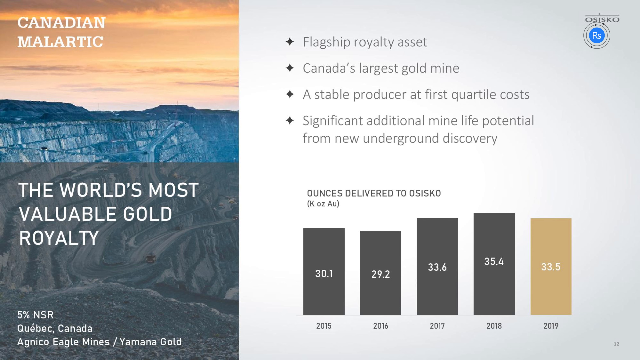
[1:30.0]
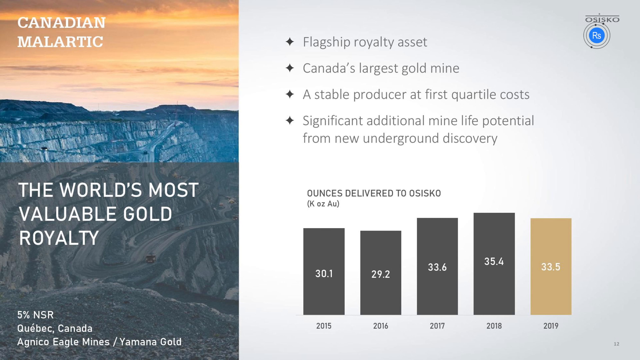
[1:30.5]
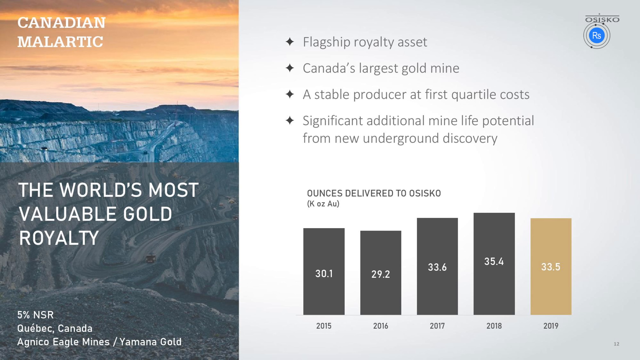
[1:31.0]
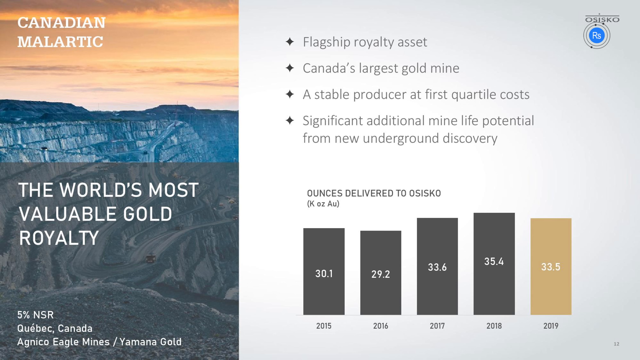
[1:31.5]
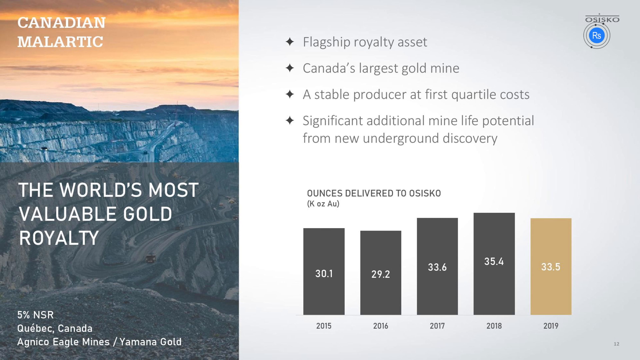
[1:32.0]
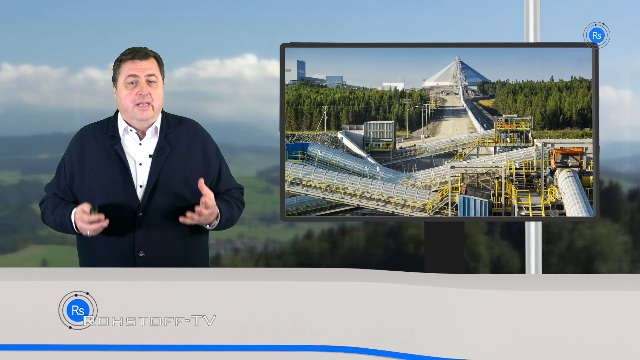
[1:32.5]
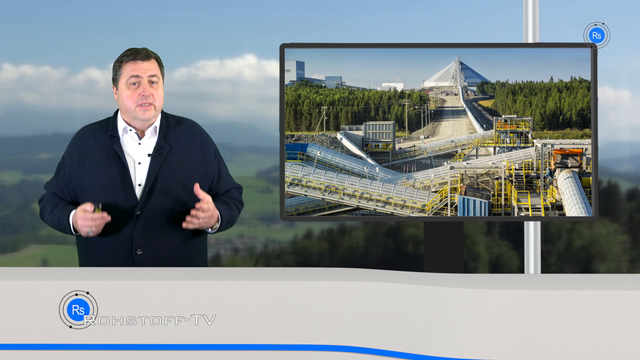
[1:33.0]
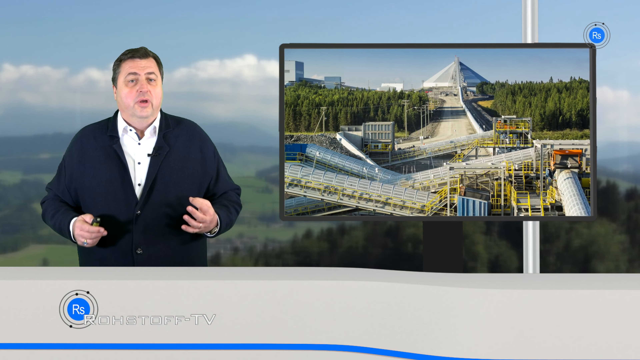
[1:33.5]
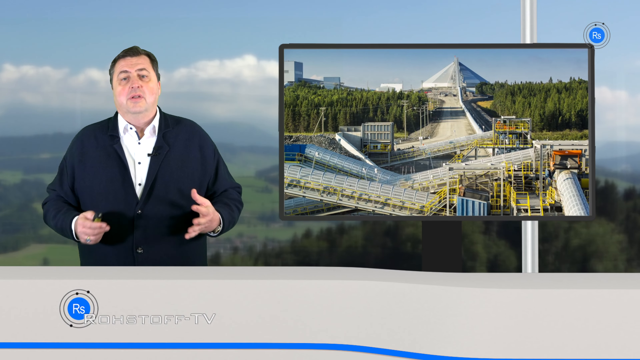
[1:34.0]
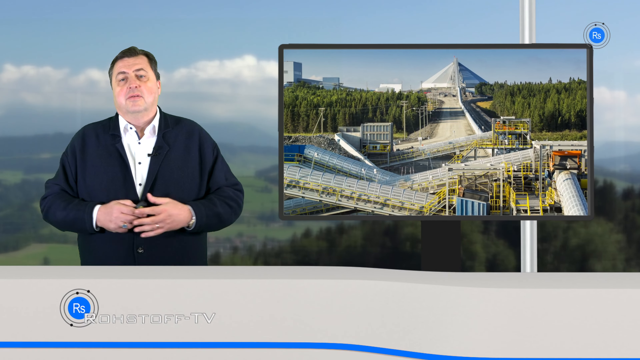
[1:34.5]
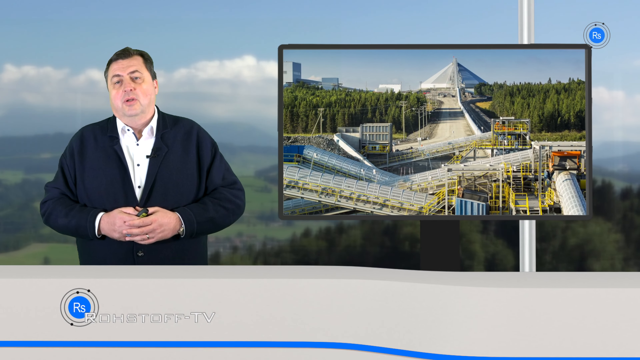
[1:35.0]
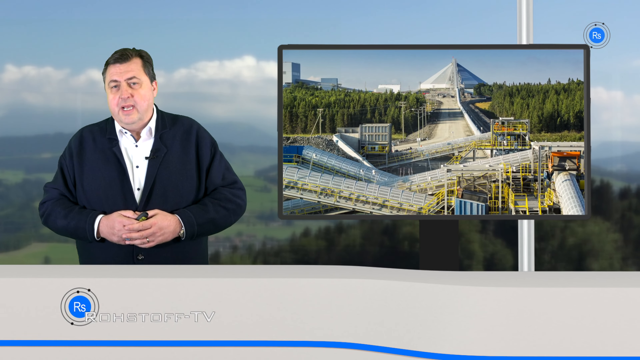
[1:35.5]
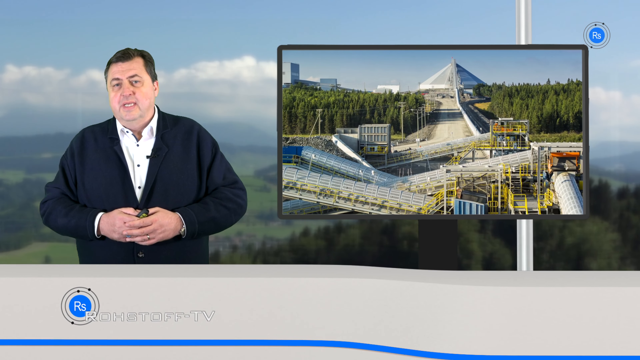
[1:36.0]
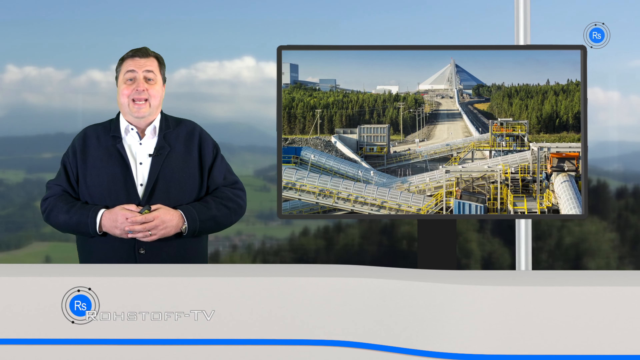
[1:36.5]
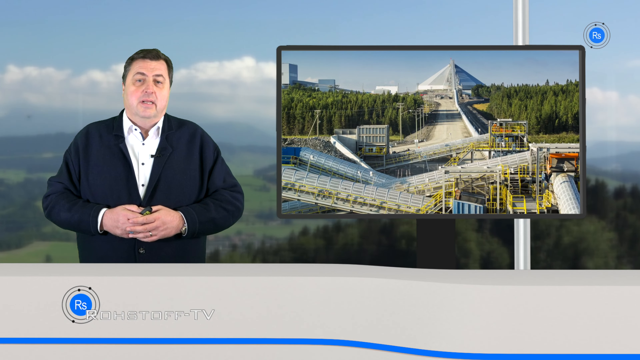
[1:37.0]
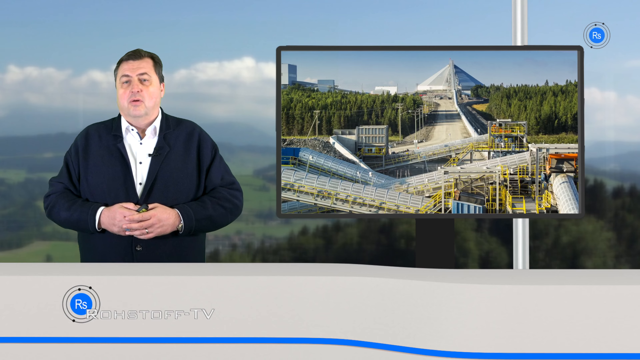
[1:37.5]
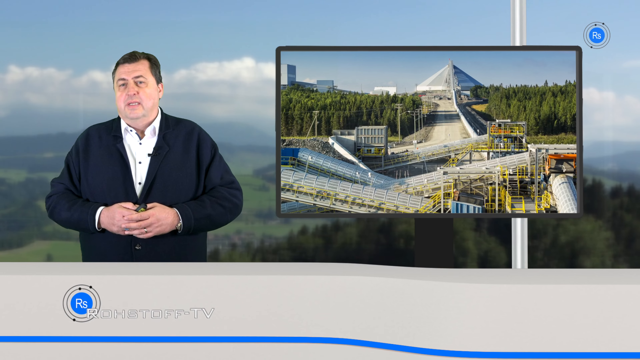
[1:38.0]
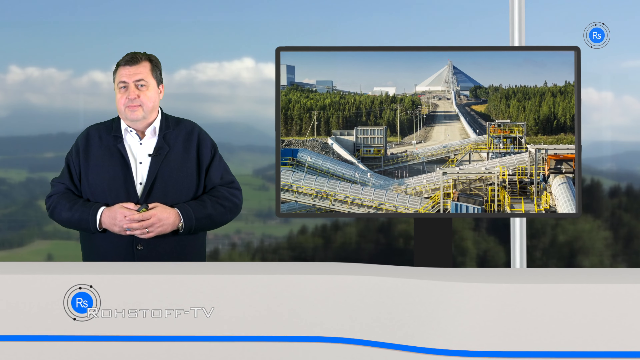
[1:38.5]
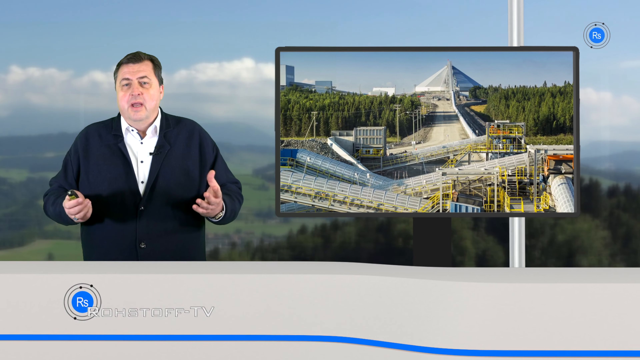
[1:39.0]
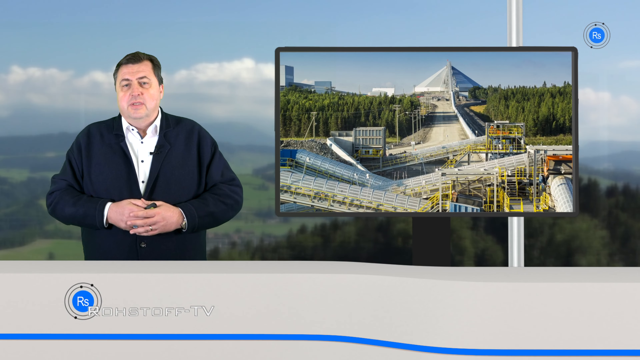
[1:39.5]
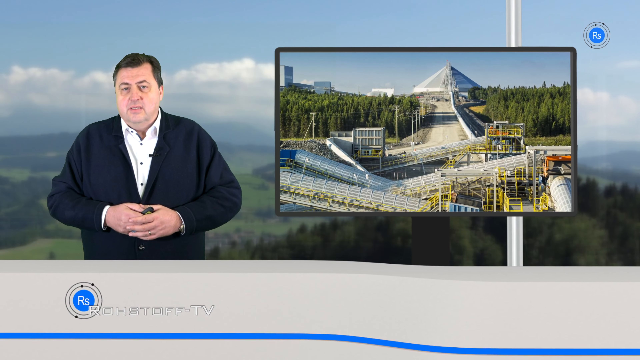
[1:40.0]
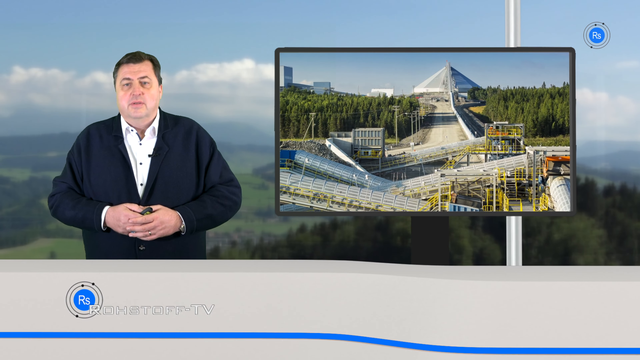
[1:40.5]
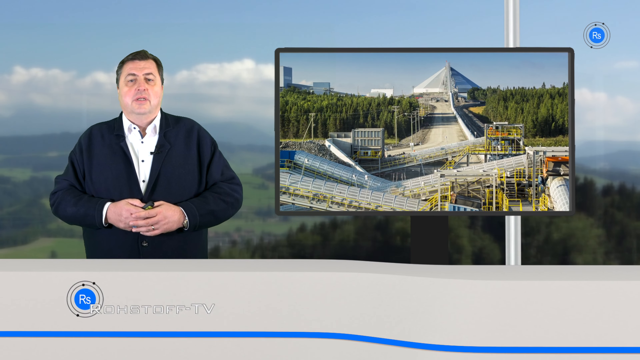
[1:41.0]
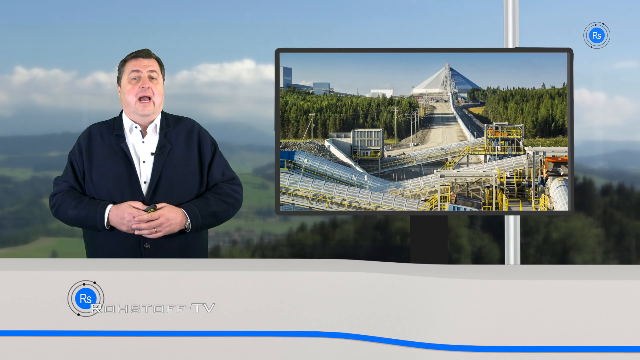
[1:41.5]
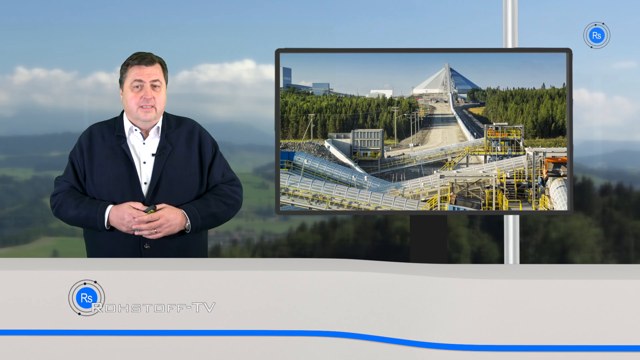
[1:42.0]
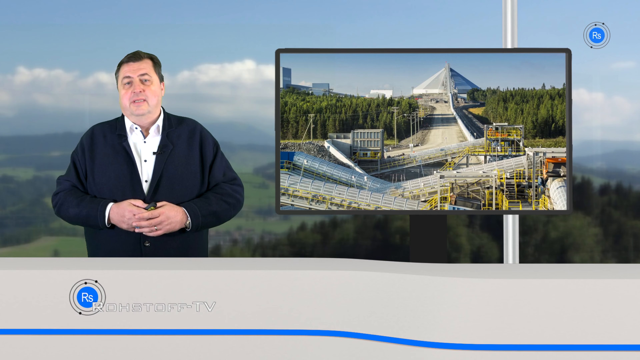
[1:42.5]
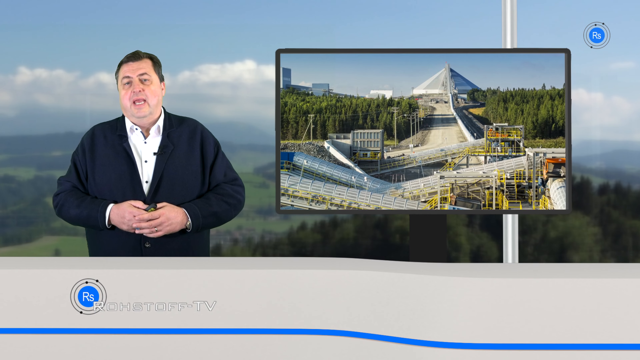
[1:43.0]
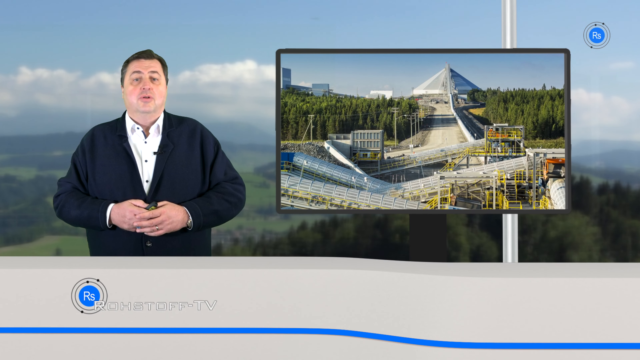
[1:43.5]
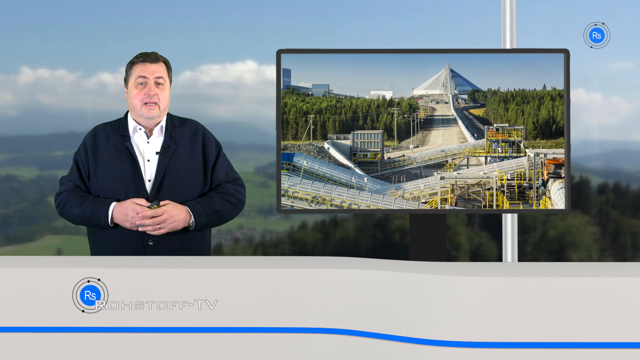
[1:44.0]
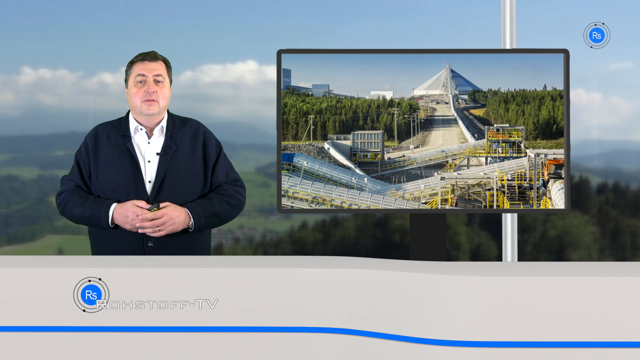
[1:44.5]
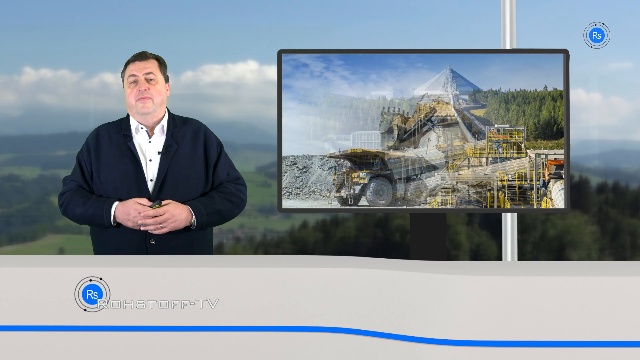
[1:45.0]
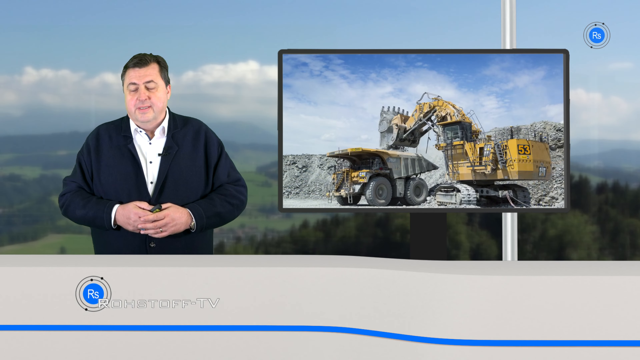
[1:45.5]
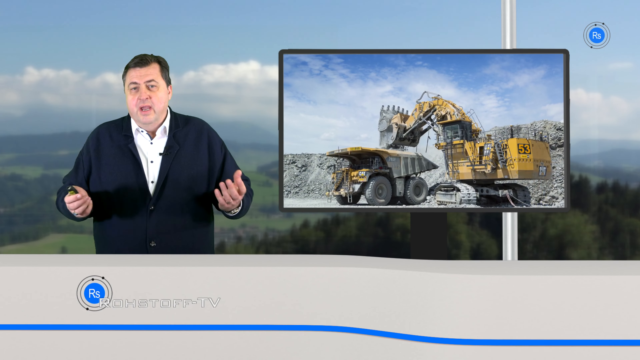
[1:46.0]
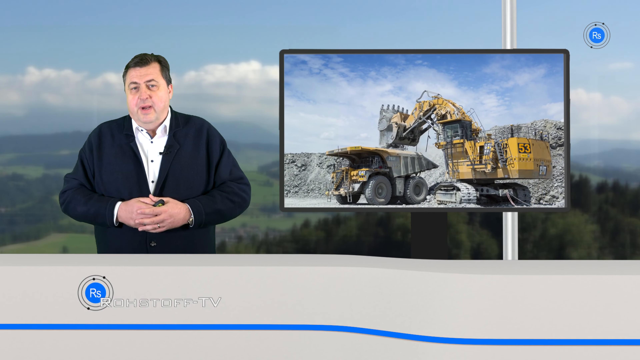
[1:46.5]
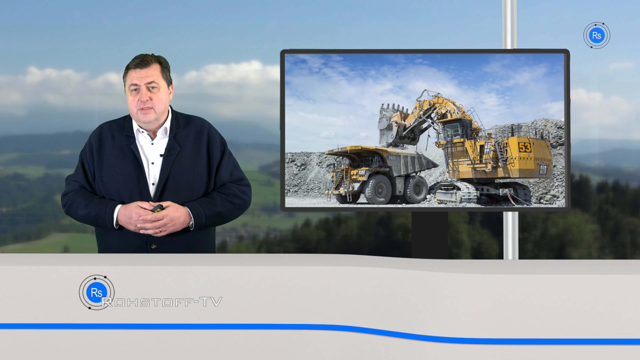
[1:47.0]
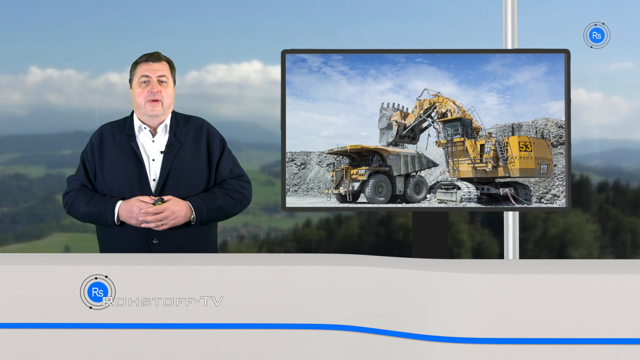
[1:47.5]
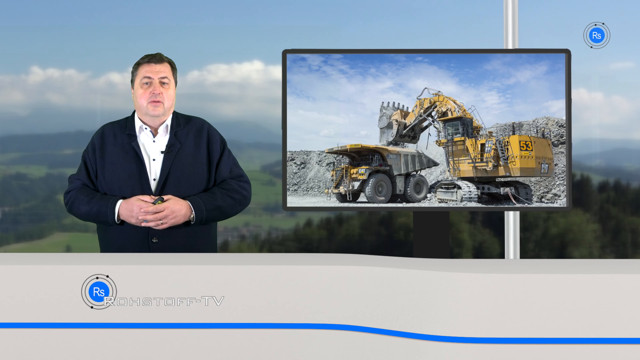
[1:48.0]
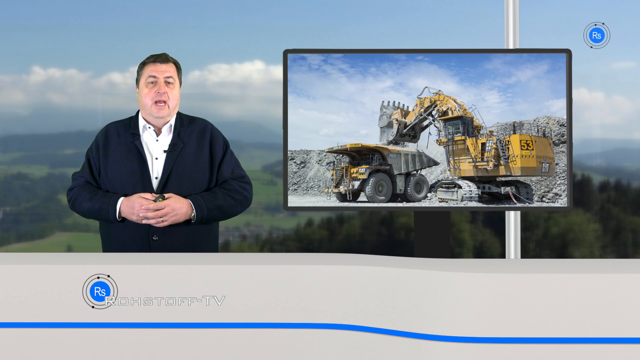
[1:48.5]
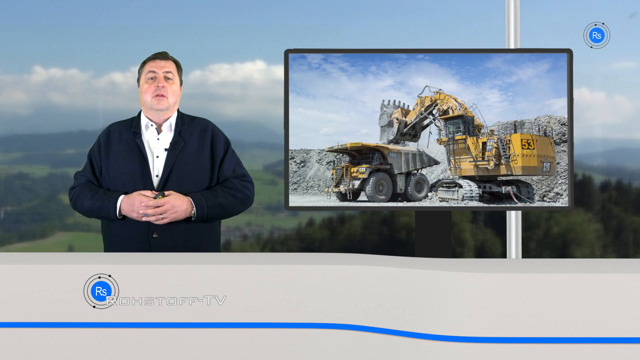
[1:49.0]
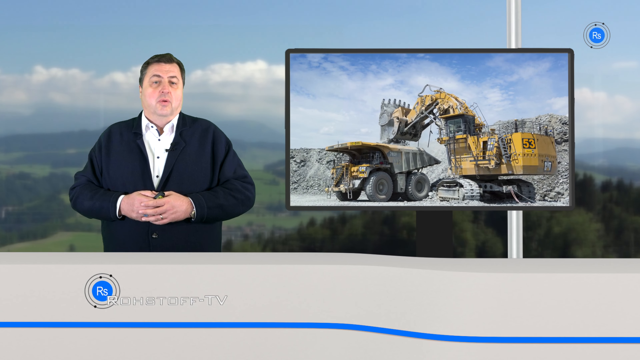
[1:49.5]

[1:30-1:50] More documents describe Osisko as the world's most valuable gold royalty, with a Canadian flagship royalty asset at Canada's largest gold mine, a stable producer with significant additional mine life potential and new gold discoveries. The screen behind the presenter shows a very large factory, and pictures show tractors in action.